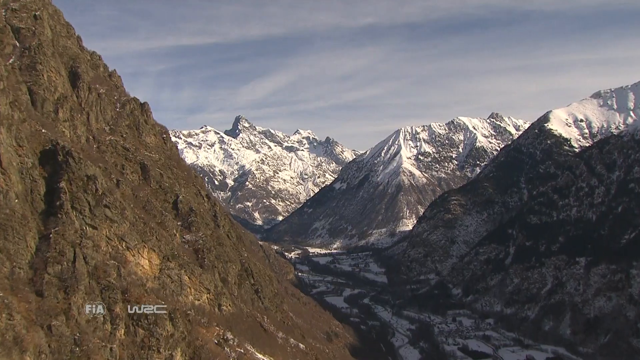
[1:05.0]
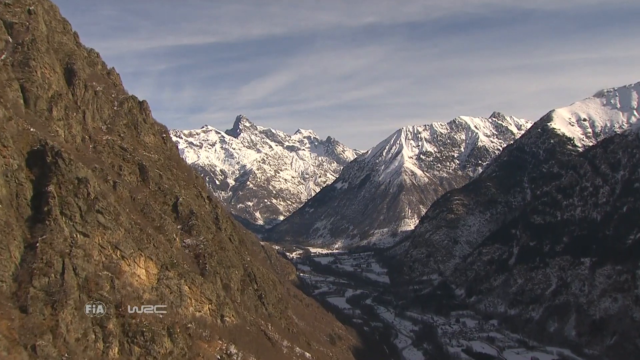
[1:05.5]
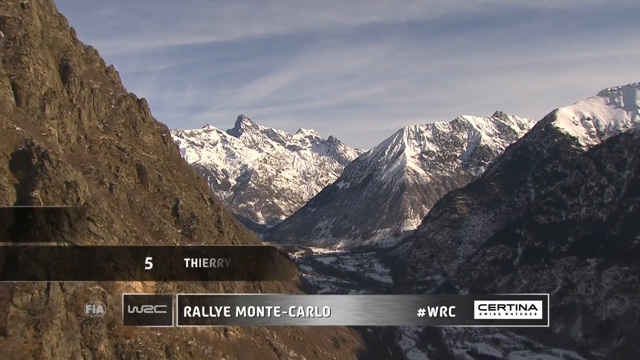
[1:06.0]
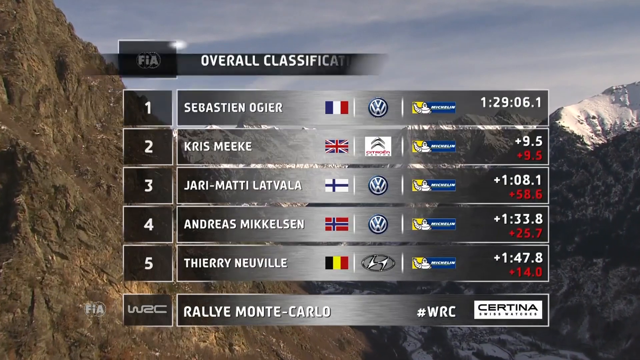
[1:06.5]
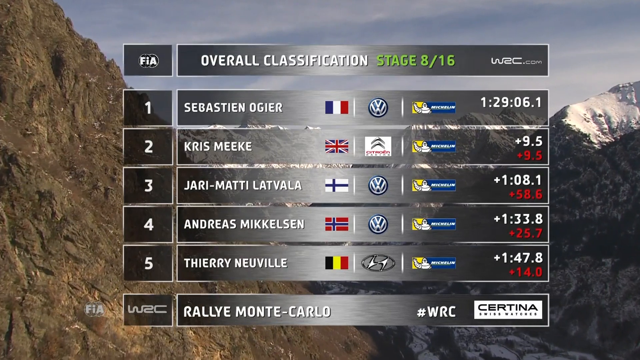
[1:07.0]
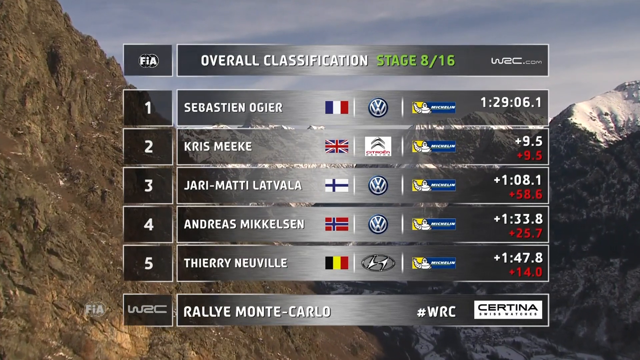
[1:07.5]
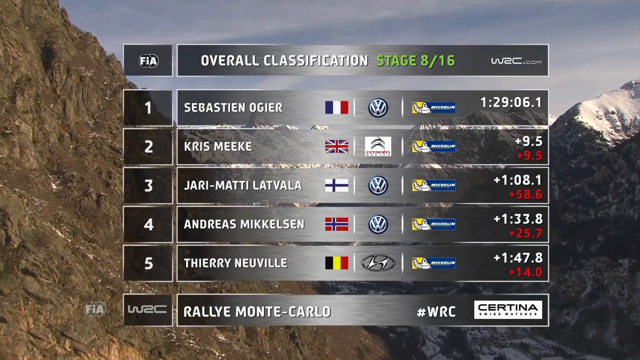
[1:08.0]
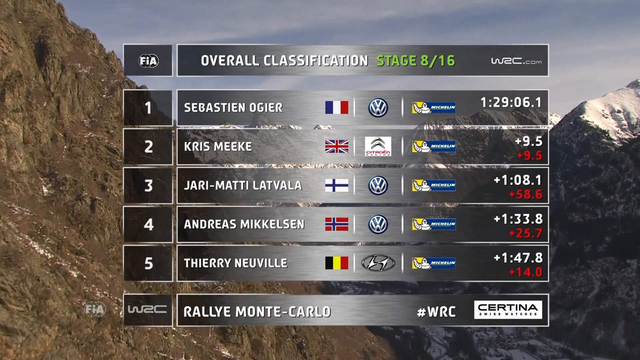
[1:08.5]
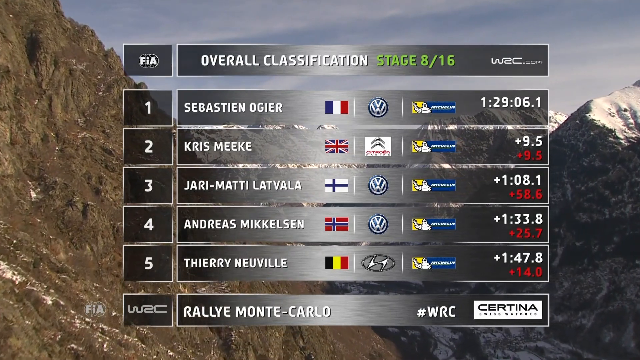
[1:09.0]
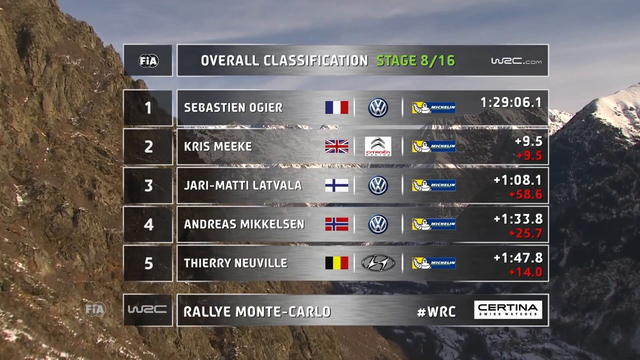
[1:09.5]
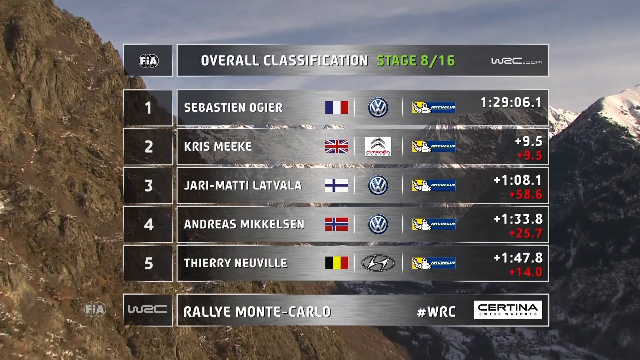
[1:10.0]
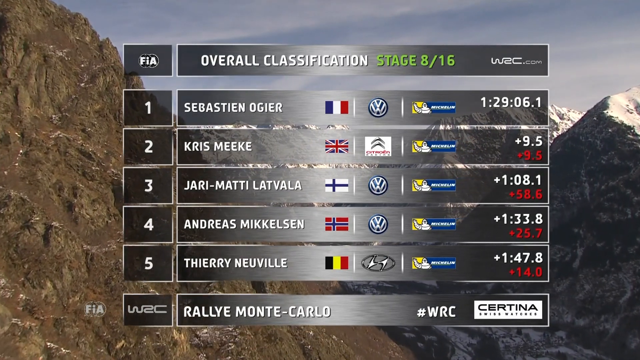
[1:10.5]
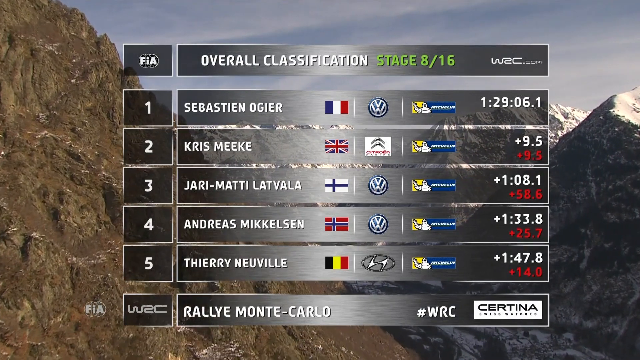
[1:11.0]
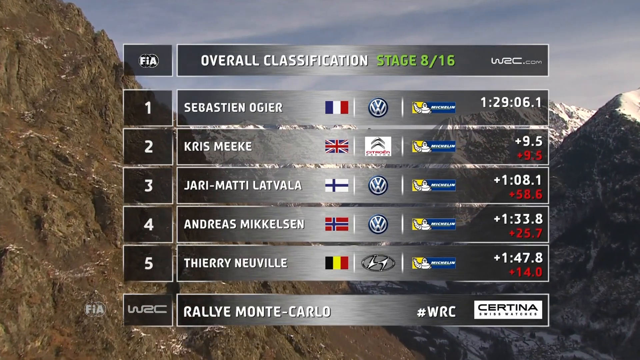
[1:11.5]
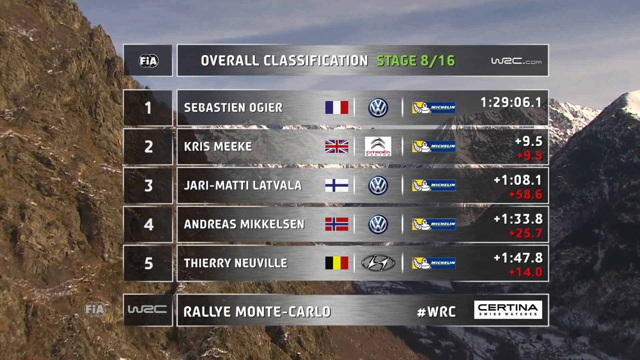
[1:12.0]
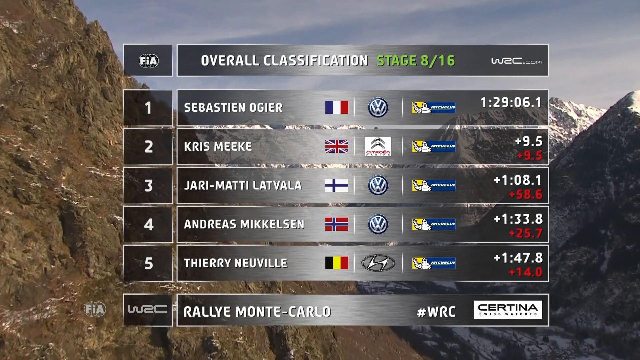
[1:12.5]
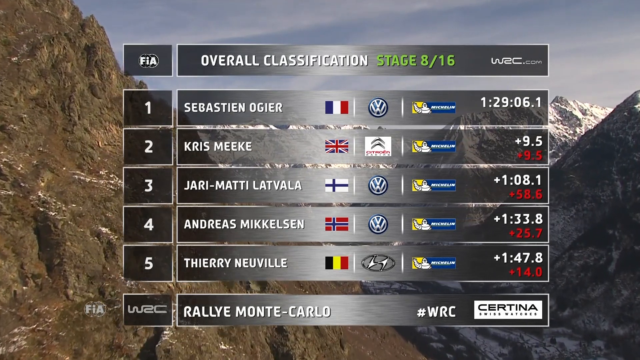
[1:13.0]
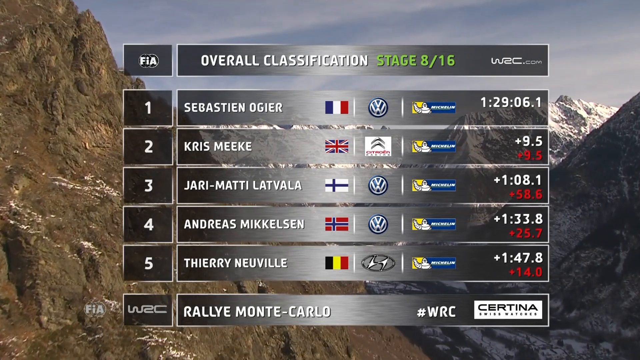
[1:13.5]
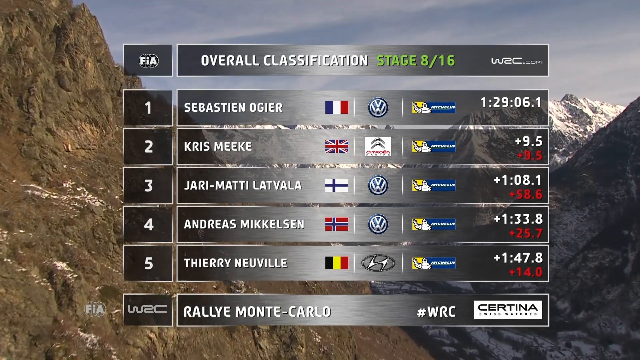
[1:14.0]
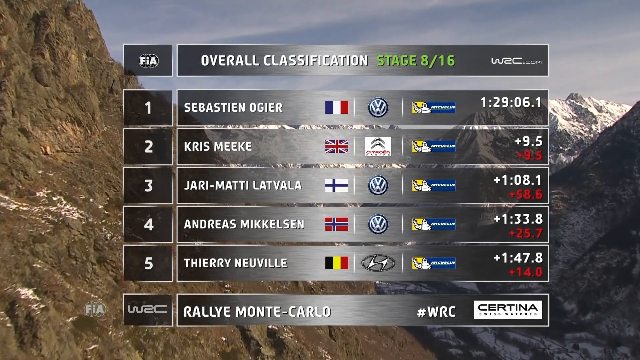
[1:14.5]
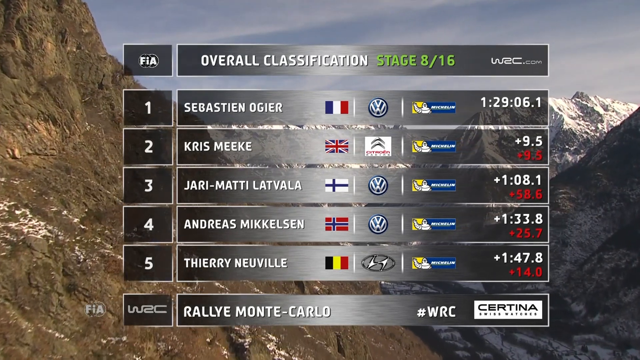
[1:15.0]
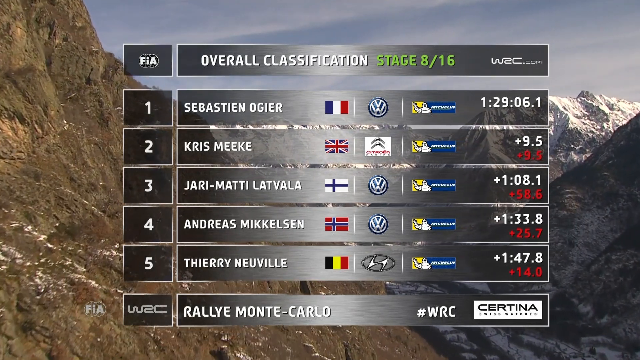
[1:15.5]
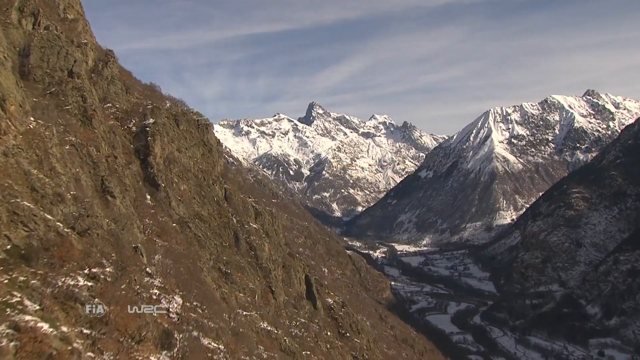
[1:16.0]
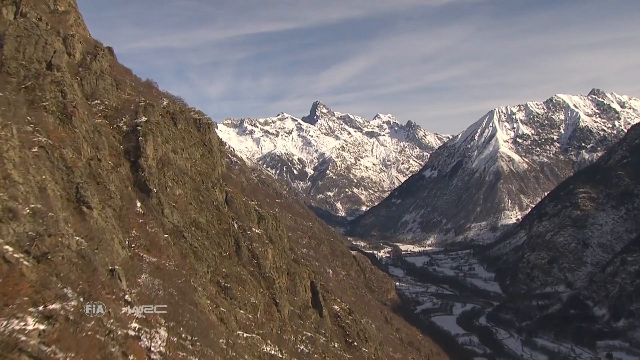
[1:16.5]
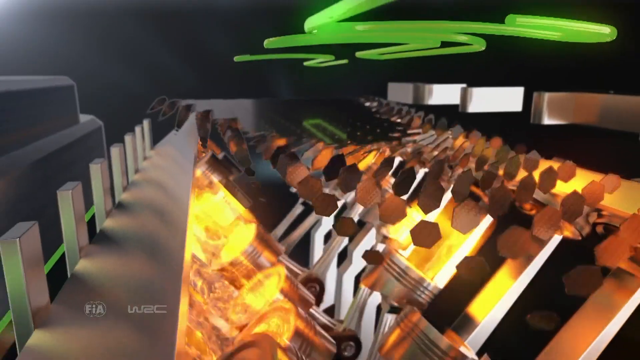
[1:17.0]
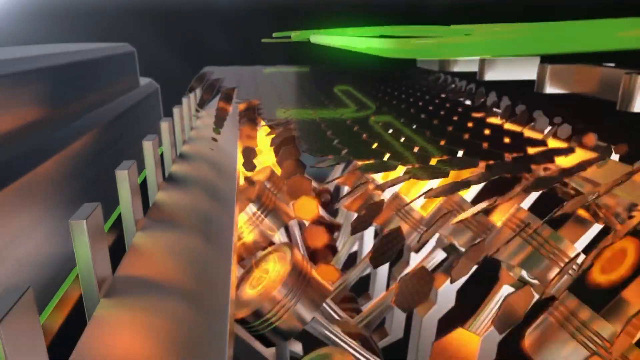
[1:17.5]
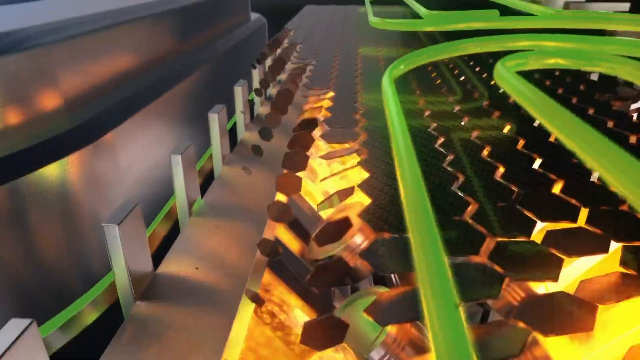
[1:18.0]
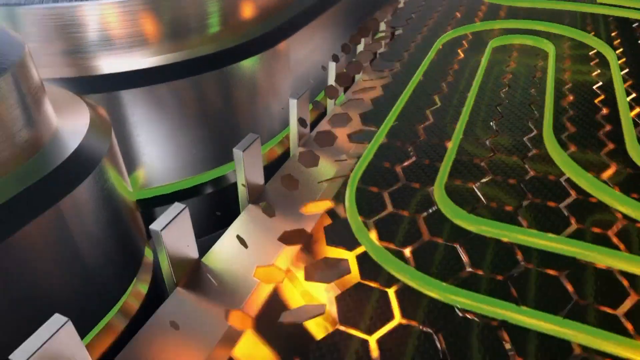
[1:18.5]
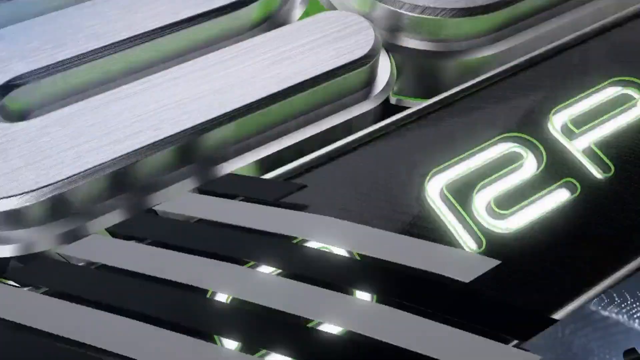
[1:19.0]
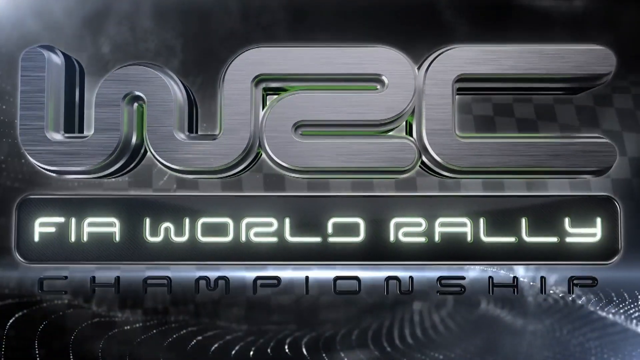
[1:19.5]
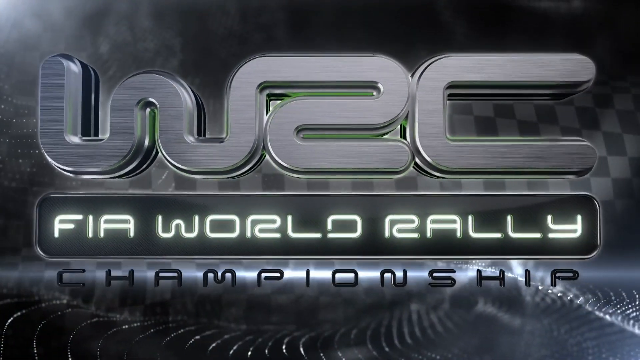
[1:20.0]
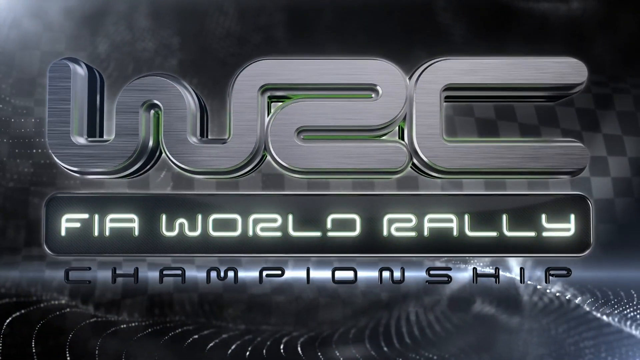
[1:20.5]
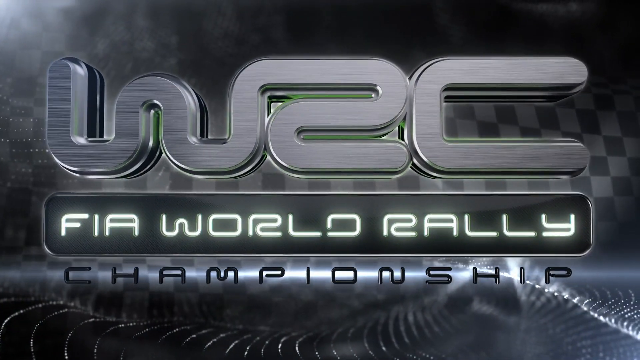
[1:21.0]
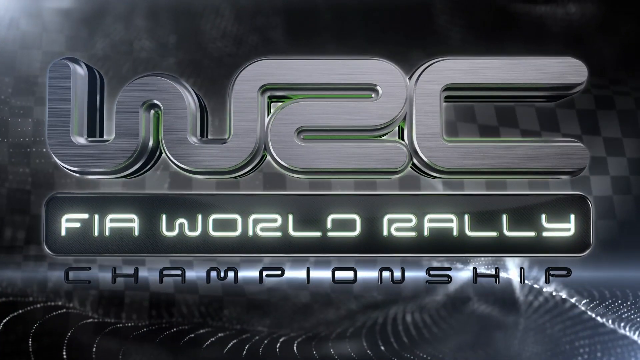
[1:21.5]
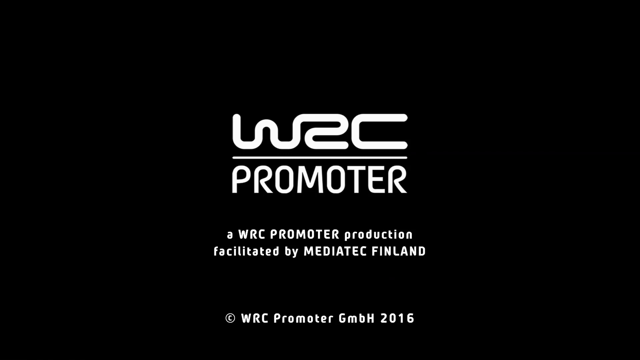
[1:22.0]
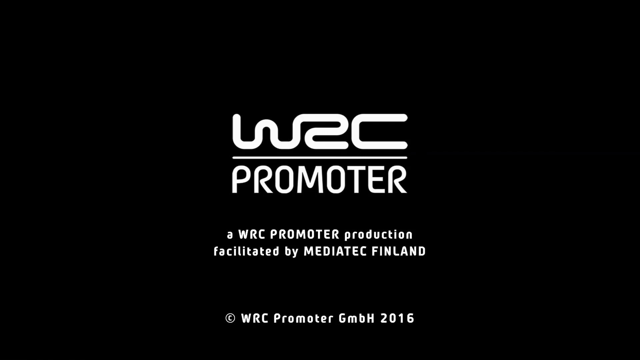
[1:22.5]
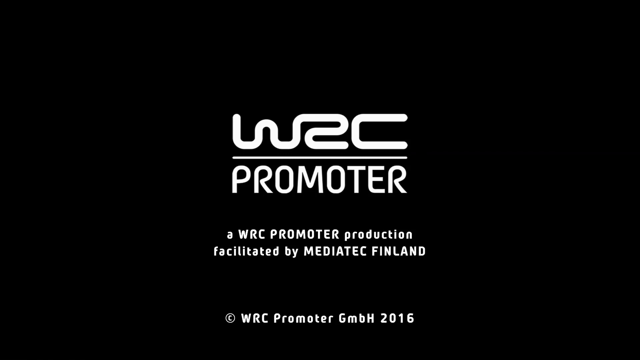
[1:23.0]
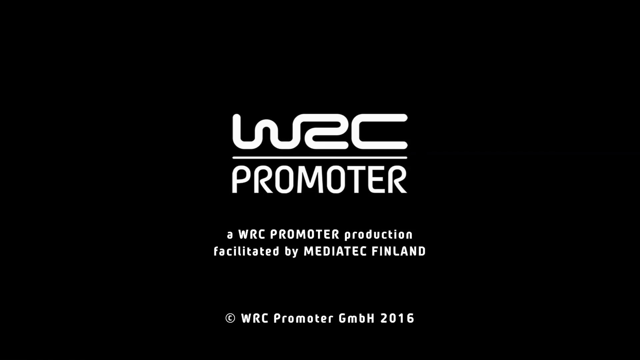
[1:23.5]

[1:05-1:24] A mountain landscape fills the background, with three mountains on the right and one on the left. The three on the right appear to be very large and covered in white snow, while the one on the left is more brown, with very little to no snow. The view sort of zooms forward. A large scoreboard pops up showing the top five leaders: first, Sebastien Ogier with a time of 1:29:06.1; second, Kris Meeke at +9.5; third, Jari-Matti Latvala at +1:08.1; fourth, Andreas Mikkelsen at +1:33.8; and fifth, Thierry Neuville at +1:47.8. The background then continues moving toward the snowy mountains. The video ends on the FIA World Rally Championship logo.